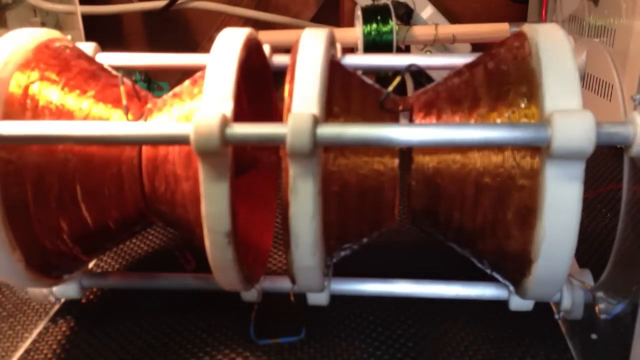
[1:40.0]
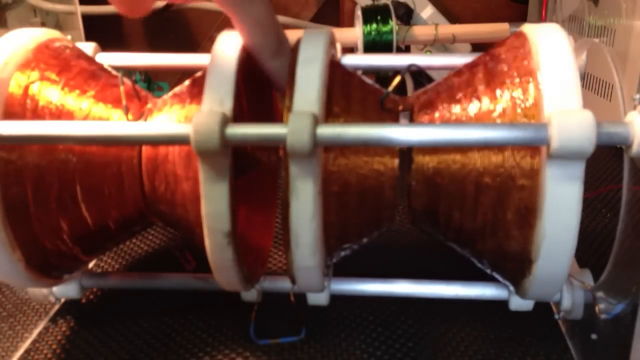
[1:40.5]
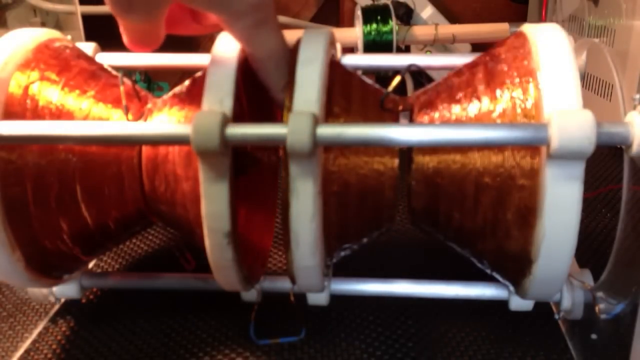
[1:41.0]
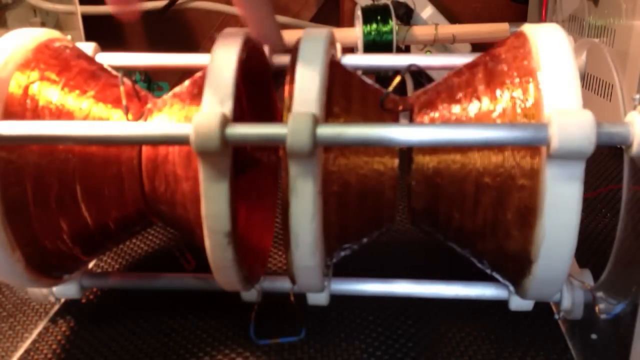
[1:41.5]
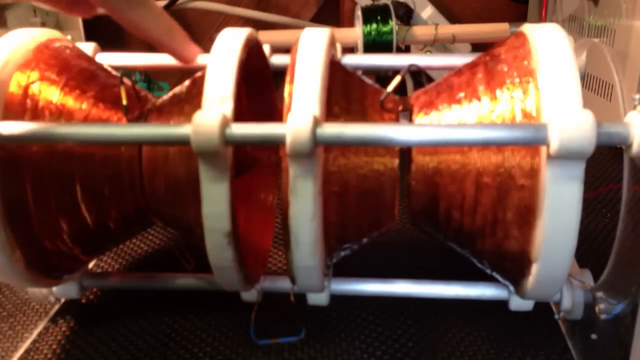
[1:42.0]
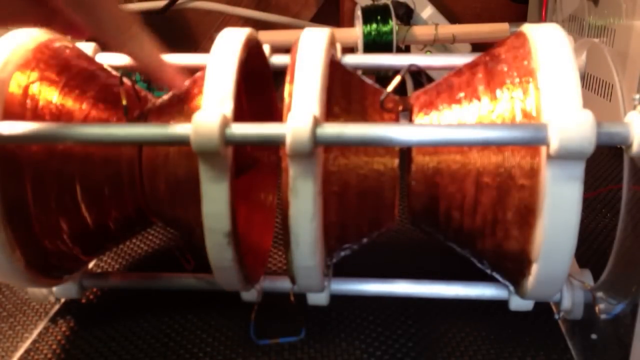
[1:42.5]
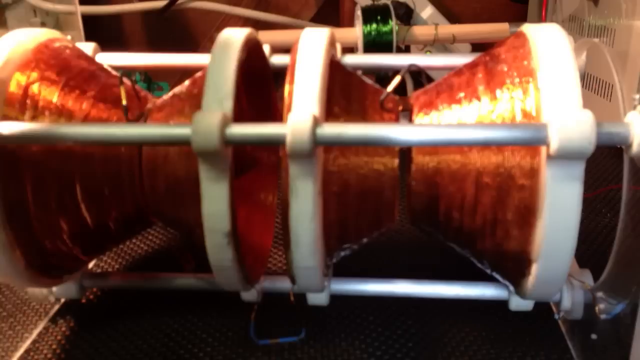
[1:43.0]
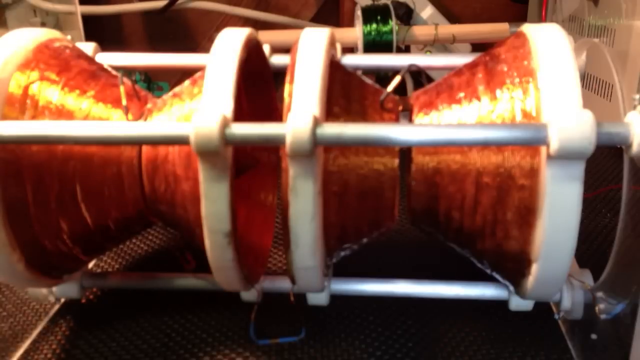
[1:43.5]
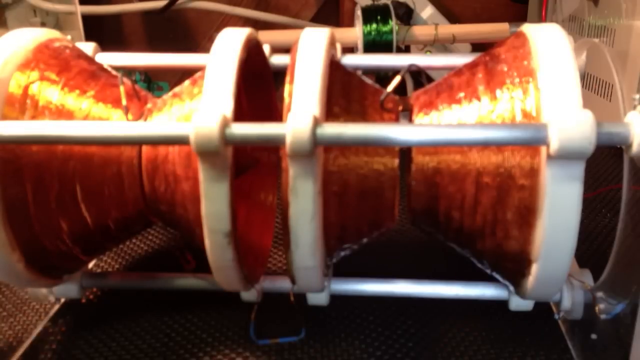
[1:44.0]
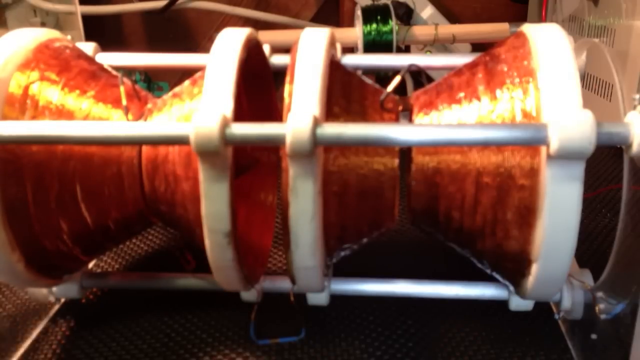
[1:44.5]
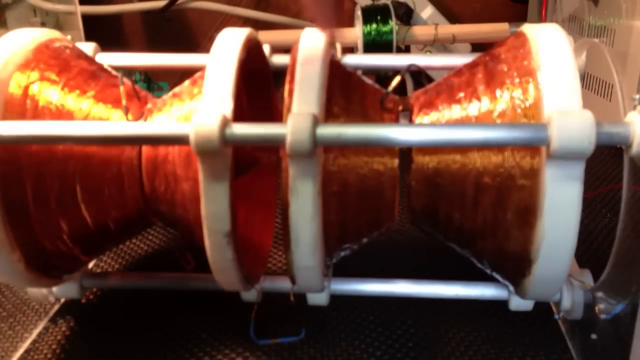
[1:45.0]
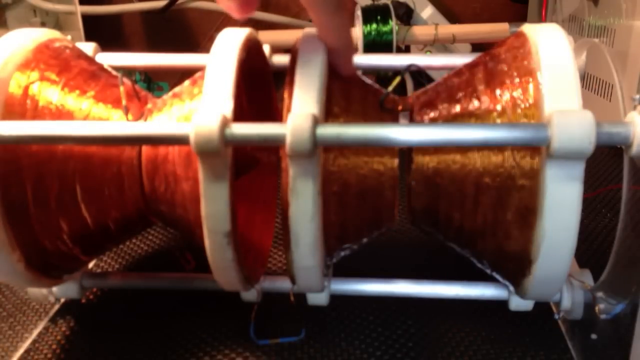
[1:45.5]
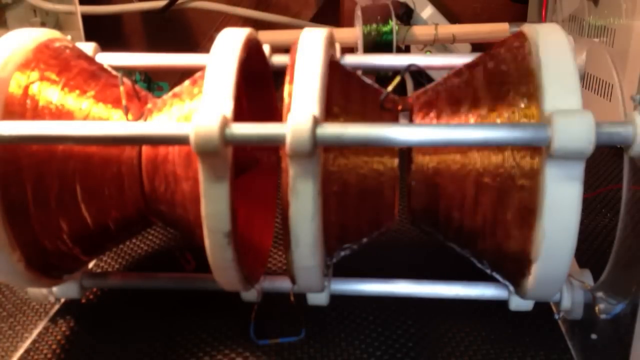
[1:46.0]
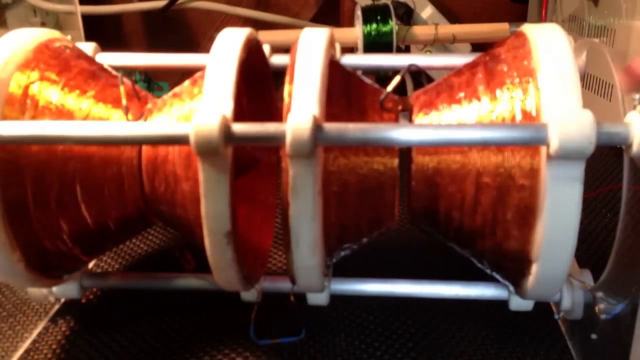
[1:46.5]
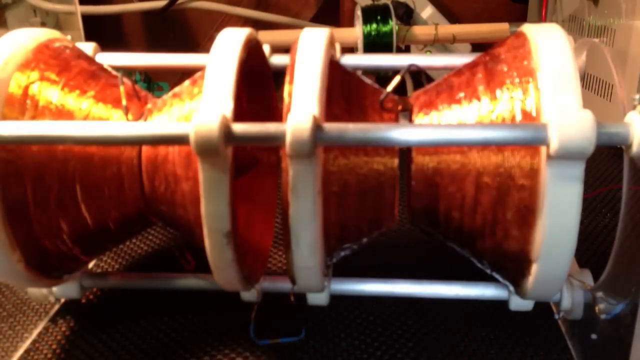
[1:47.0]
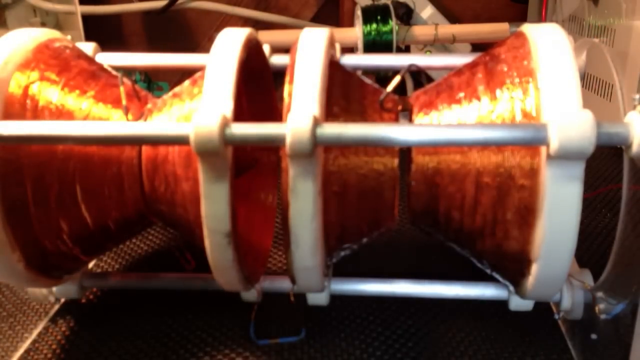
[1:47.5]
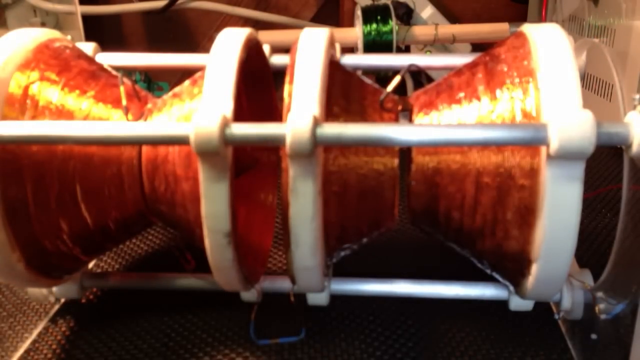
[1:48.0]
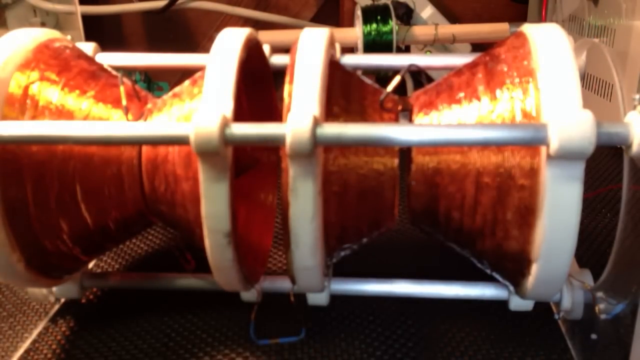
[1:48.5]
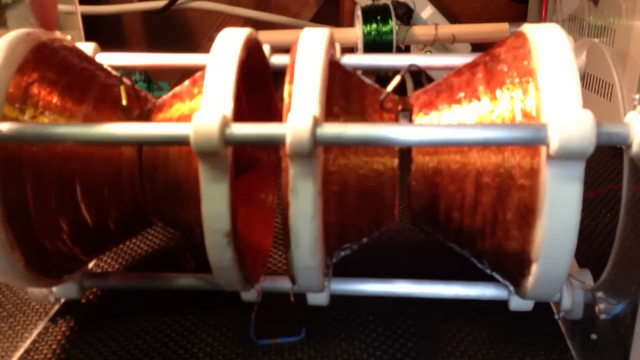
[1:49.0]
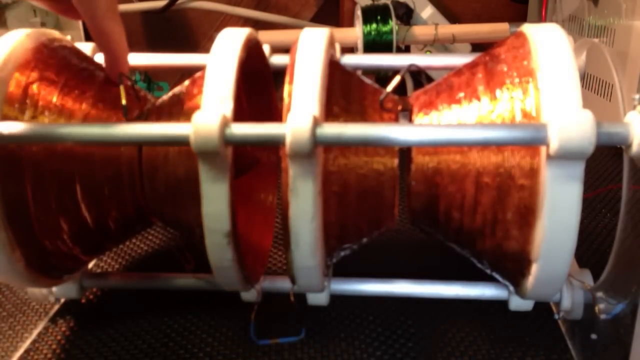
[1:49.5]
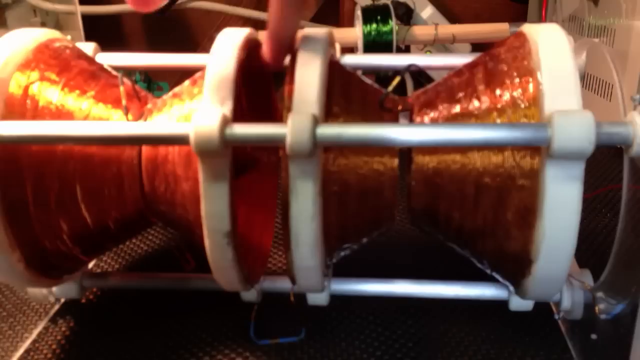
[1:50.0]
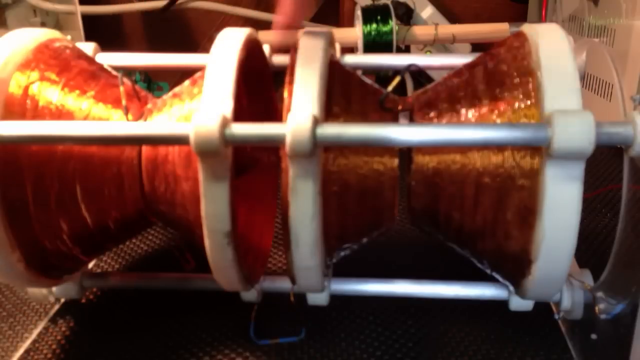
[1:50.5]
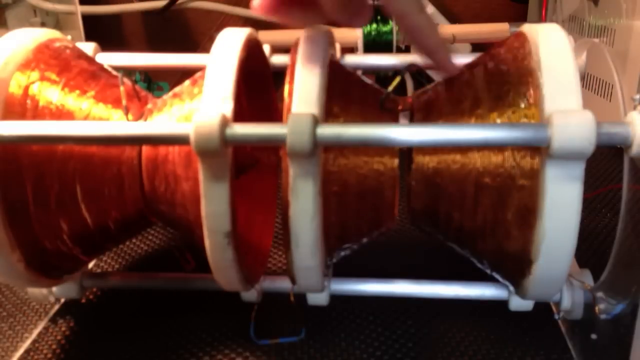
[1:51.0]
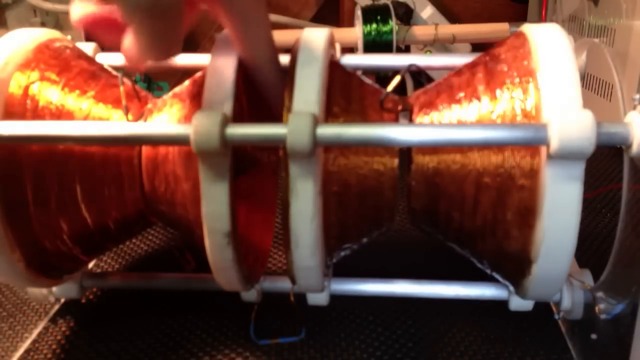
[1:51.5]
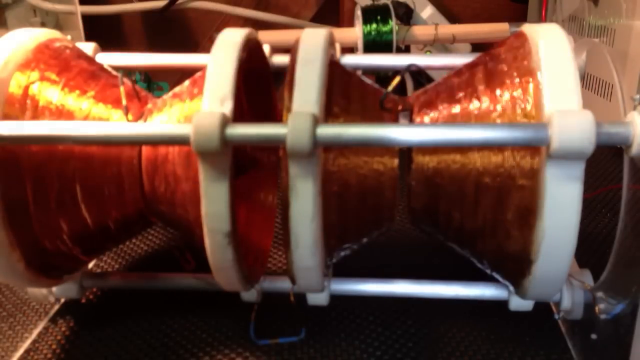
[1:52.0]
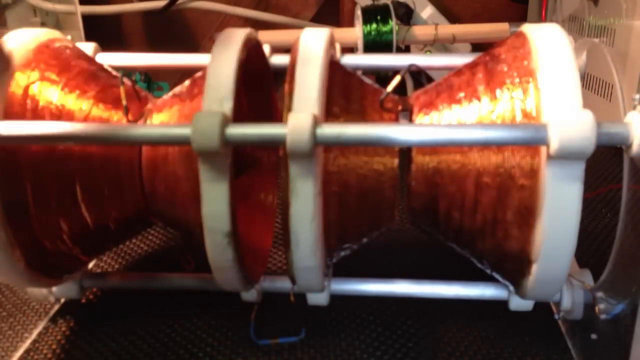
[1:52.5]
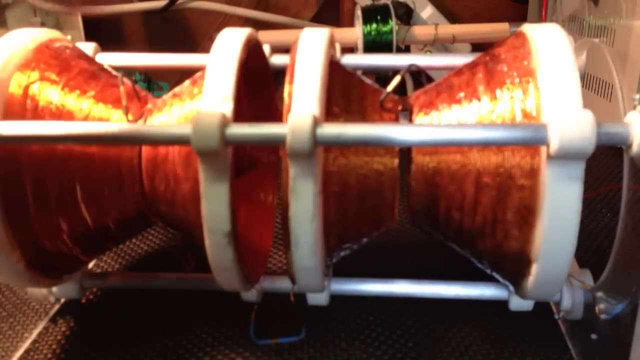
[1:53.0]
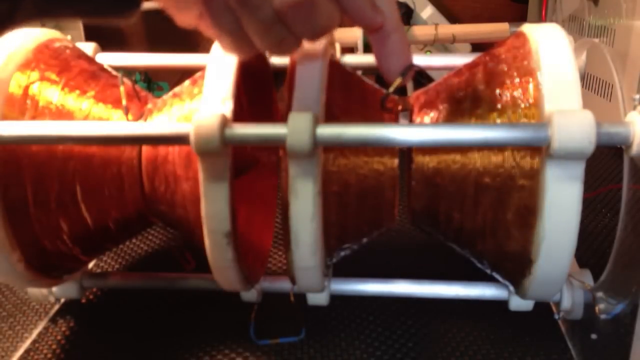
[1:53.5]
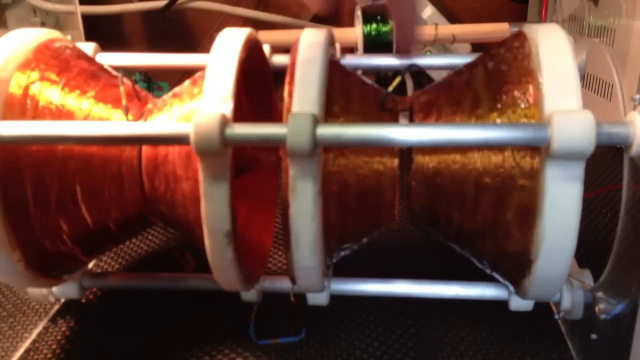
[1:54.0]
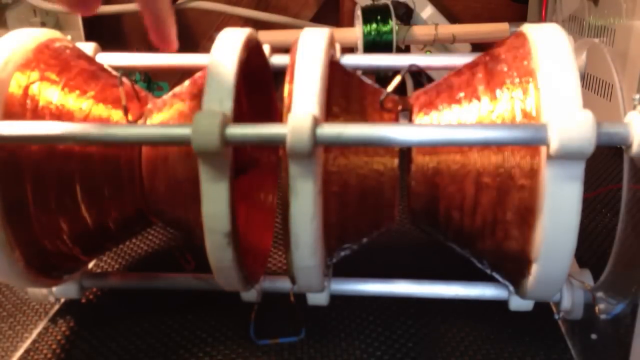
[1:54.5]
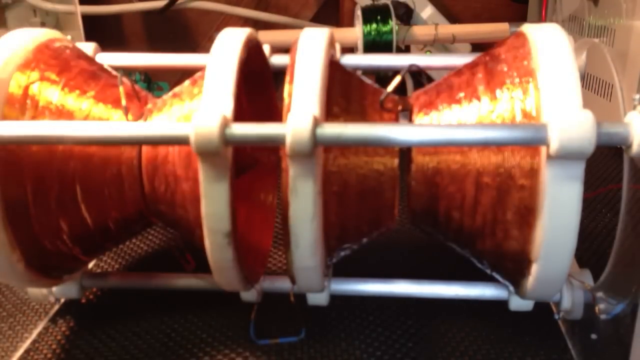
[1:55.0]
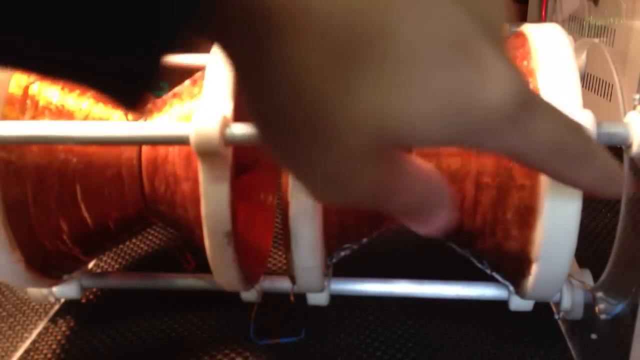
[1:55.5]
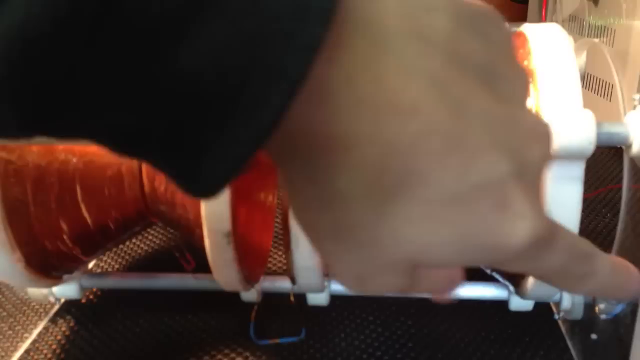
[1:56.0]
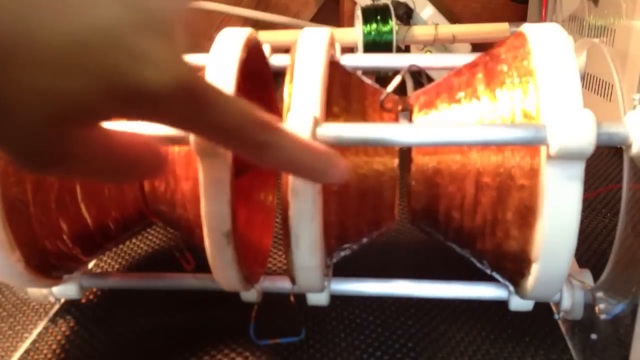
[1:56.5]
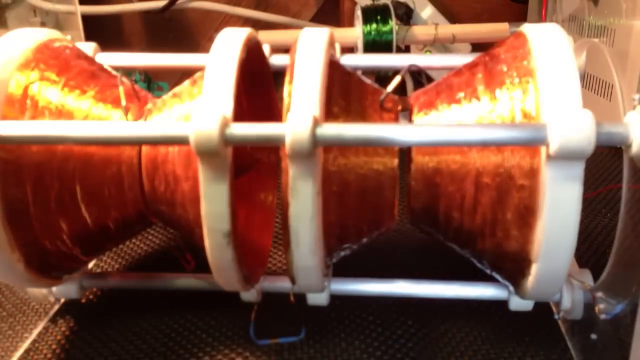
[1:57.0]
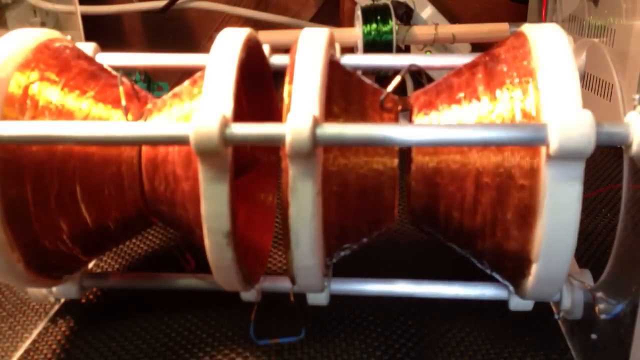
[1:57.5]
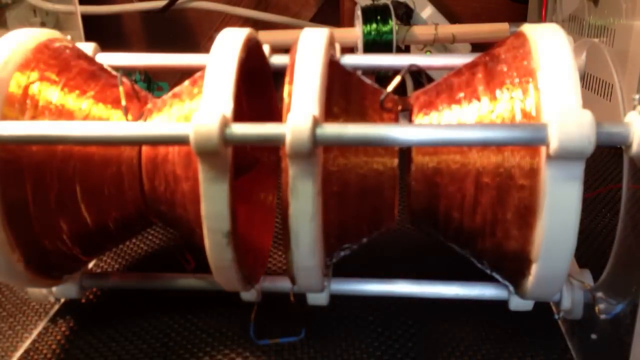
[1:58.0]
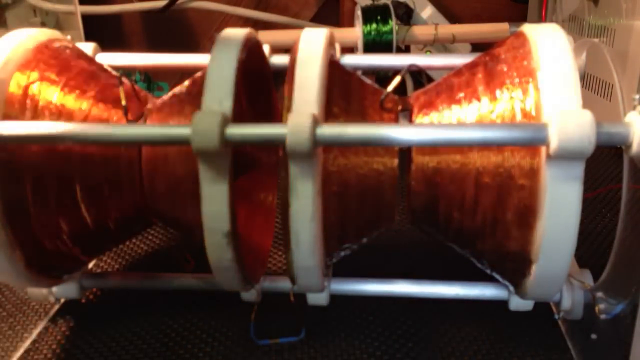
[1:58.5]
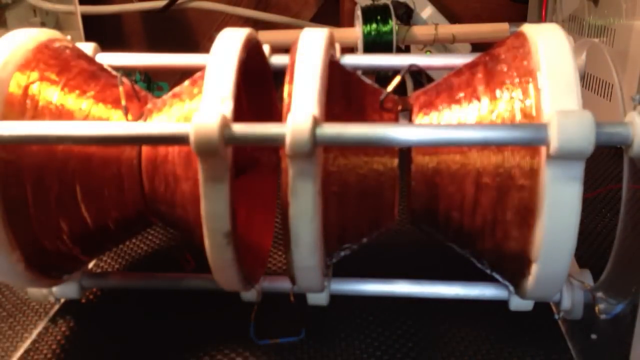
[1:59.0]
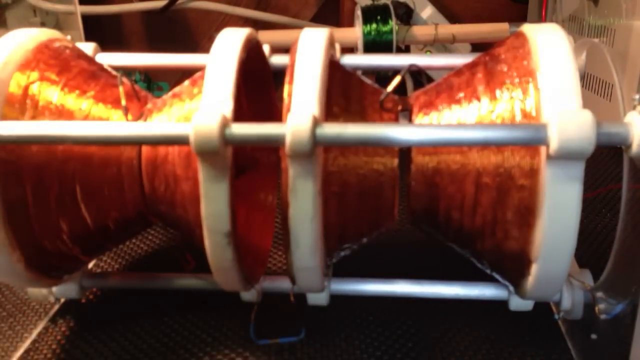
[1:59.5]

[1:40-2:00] He puts his finger over the middle pieces on the left and on the right, placing his fingers on and above the apparatus and then in front of the device. He moves his index finger, touching the surfaces of the device very rapidly. The camera is in a fixed position and nothing else changes.